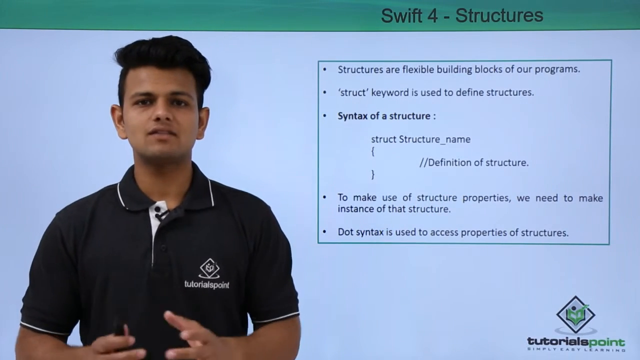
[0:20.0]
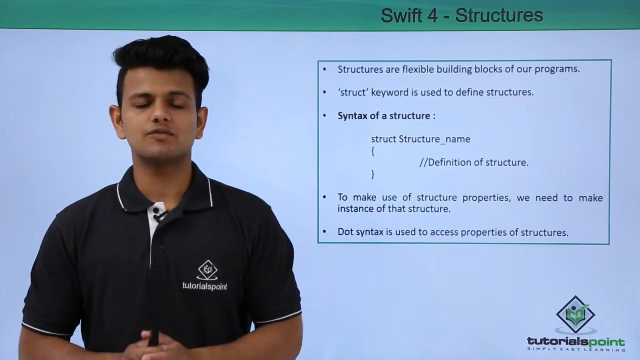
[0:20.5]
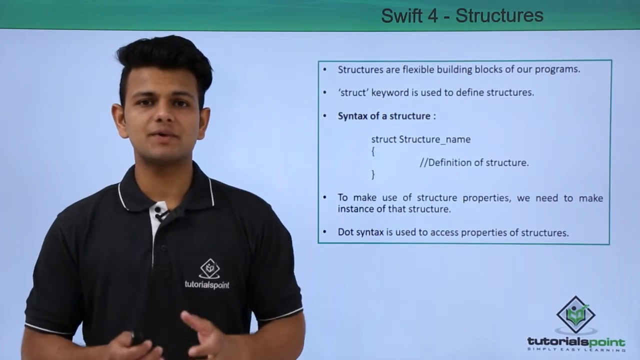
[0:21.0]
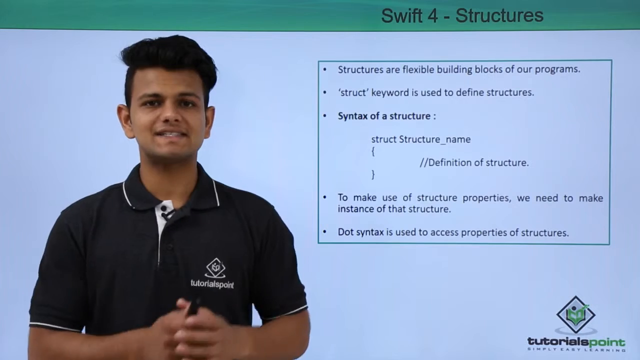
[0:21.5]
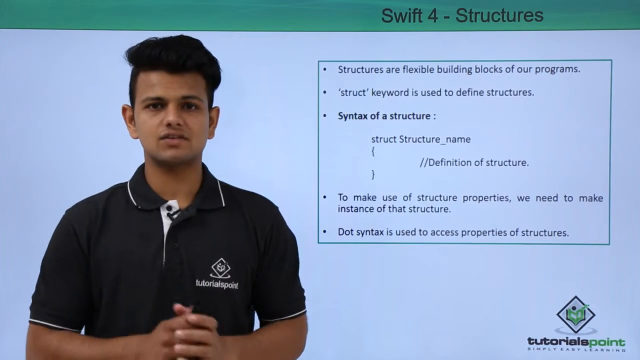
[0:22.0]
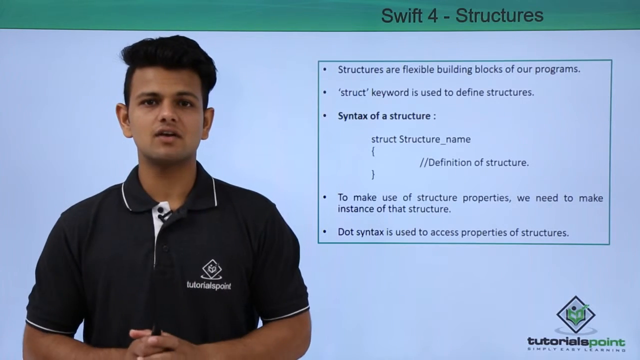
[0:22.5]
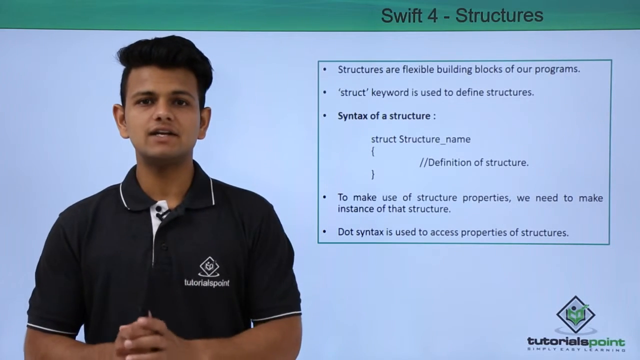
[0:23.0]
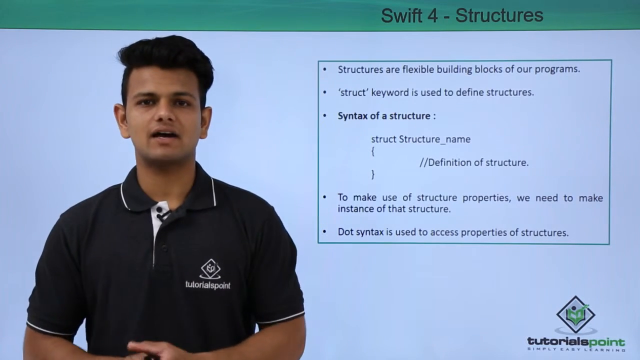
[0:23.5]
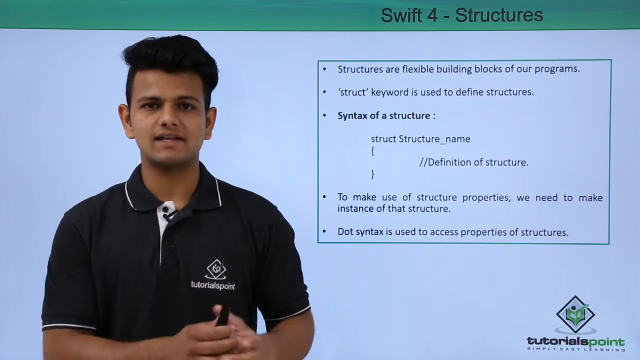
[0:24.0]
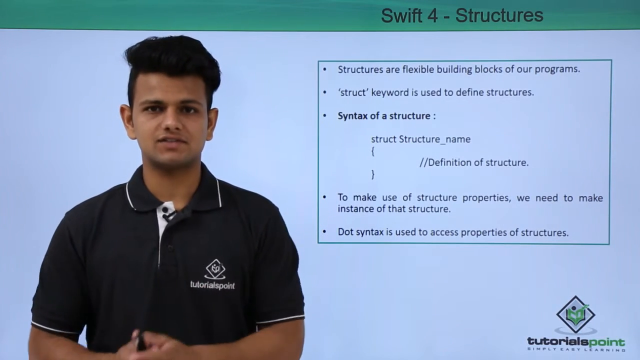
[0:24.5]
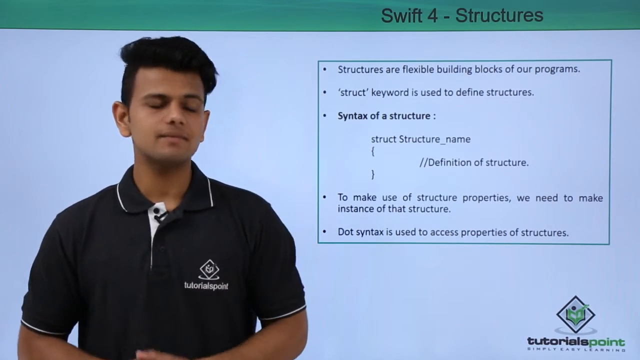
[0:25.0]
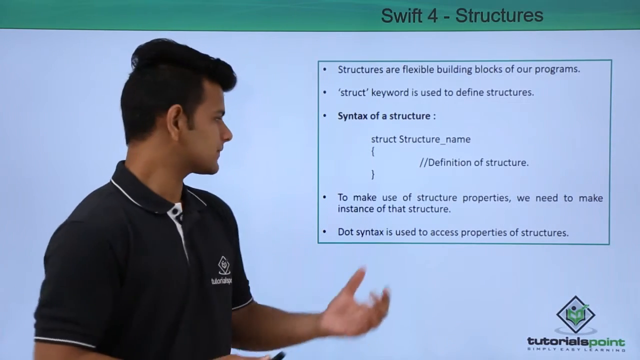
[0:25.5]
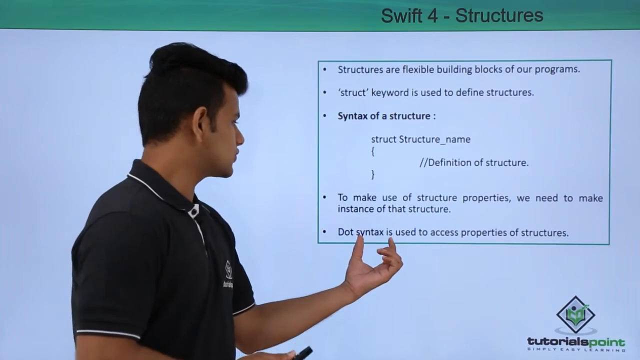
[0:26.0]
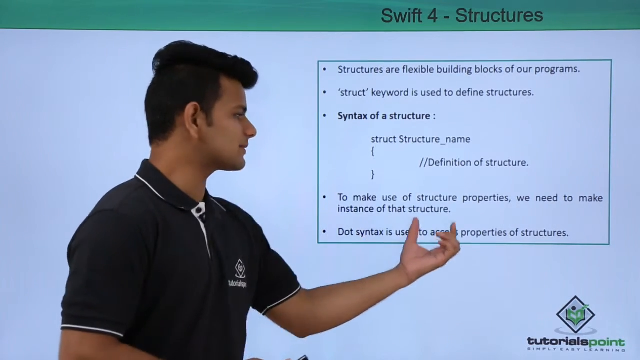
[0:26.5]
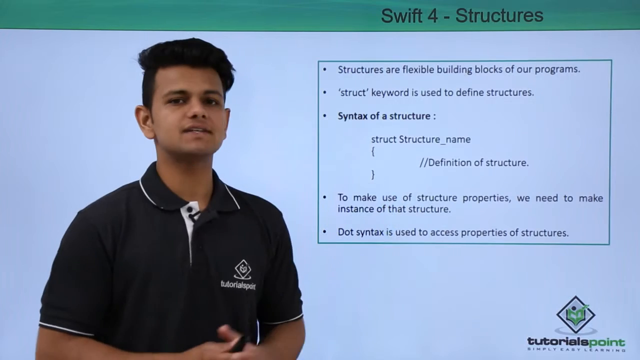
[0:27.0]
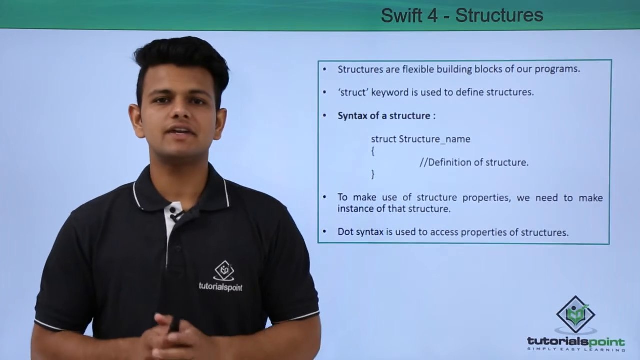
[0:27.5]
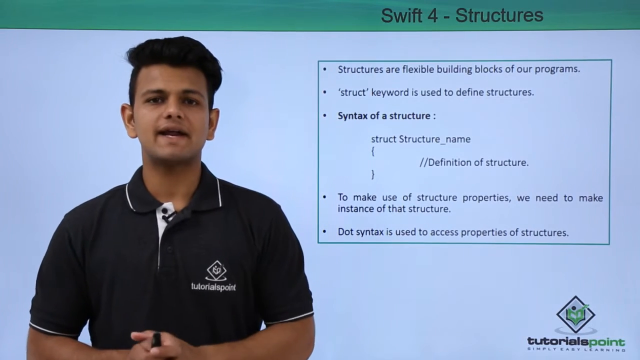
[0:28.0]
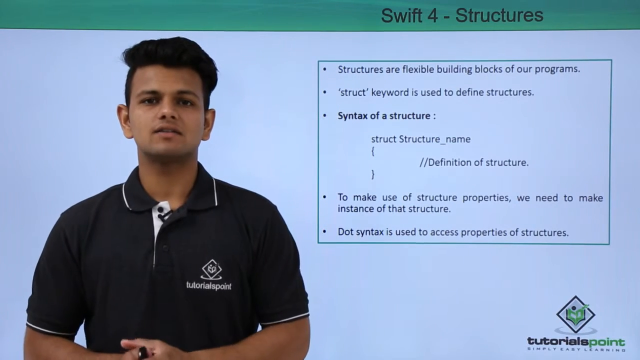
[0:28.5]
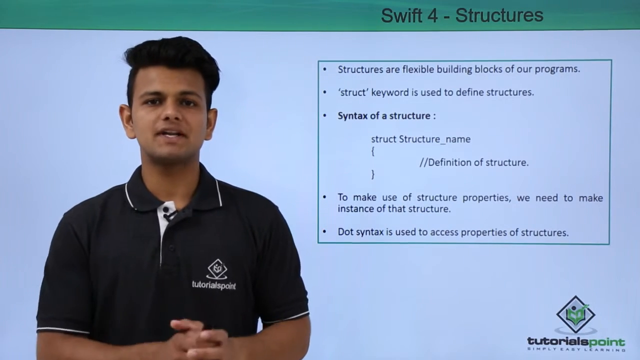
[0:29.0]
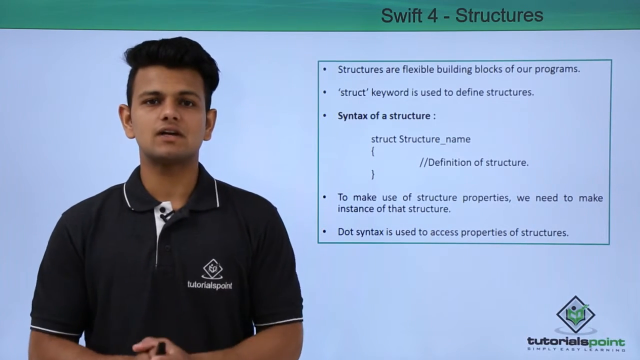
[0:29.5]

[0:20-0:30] A brown, light-skinned man with dark hair, wearing a black t-shirt with some white outlines, stands on the left side of the screen talking to the camera. Behind him is possibly a screen displaying a group of text, written as a bulleted list in a transparent rectangle with a green outline. The man occasionally turns to his side to point at the text, appearing to continue explaining the topic of the video. At the top section of the screen is the text "Swift 4 - Structures", written in black on a green background.